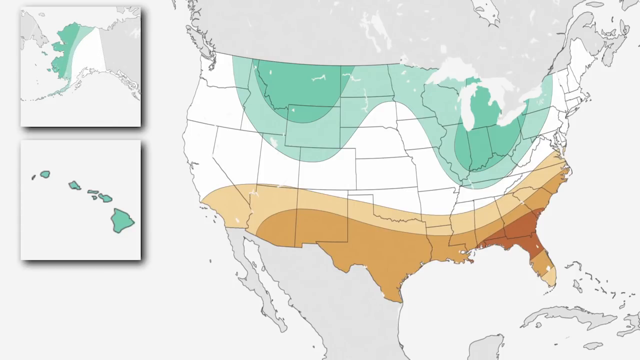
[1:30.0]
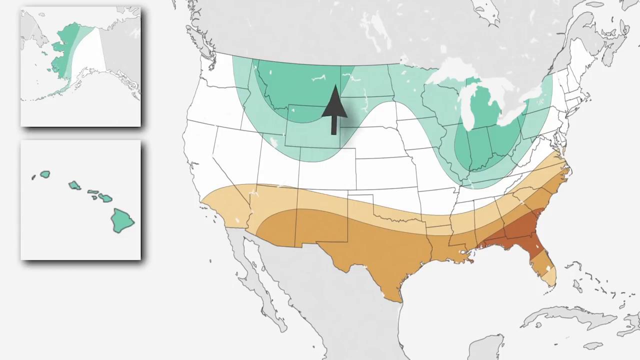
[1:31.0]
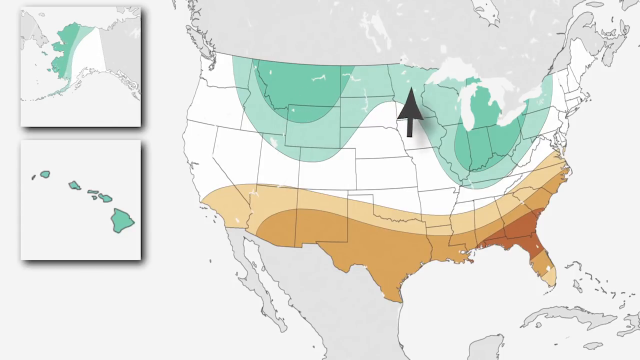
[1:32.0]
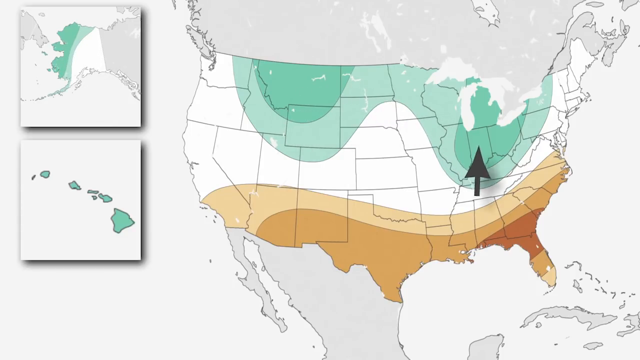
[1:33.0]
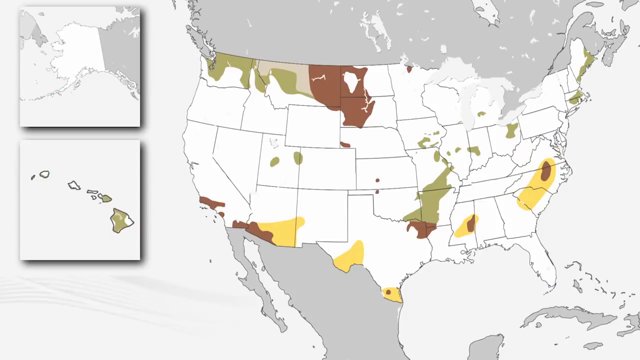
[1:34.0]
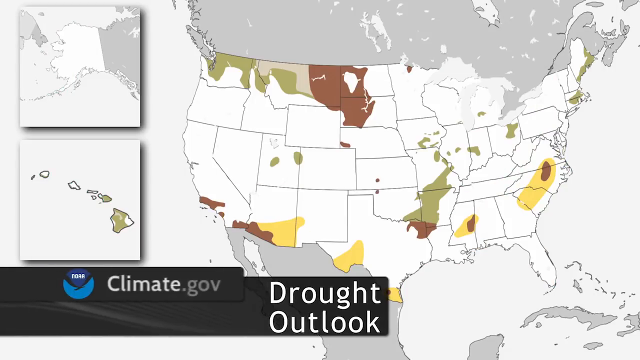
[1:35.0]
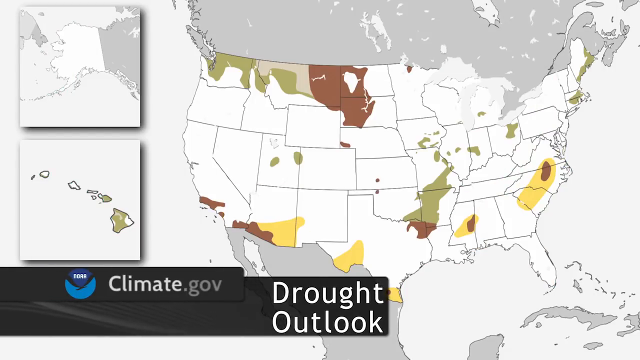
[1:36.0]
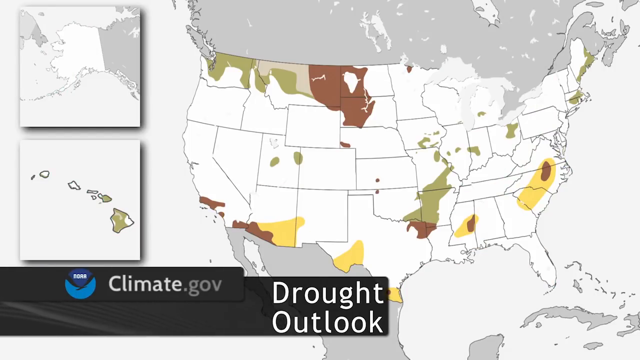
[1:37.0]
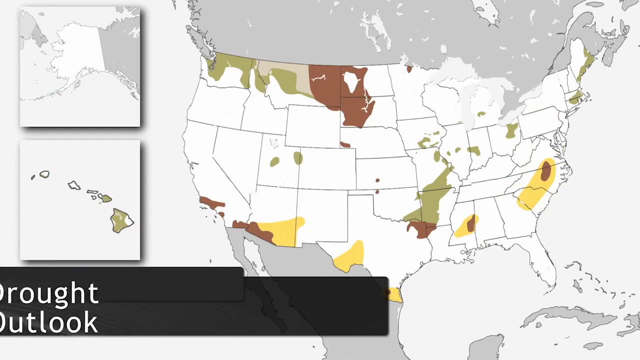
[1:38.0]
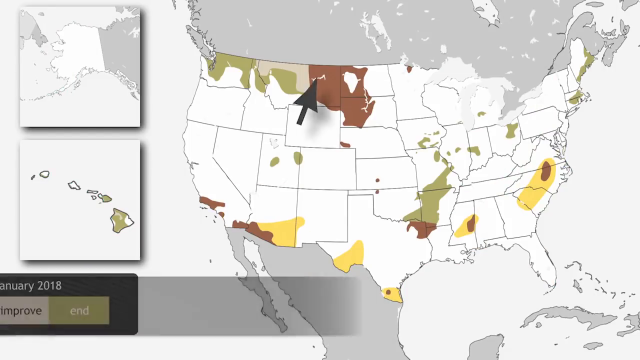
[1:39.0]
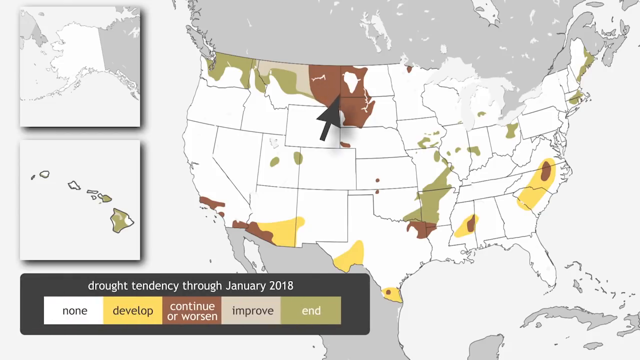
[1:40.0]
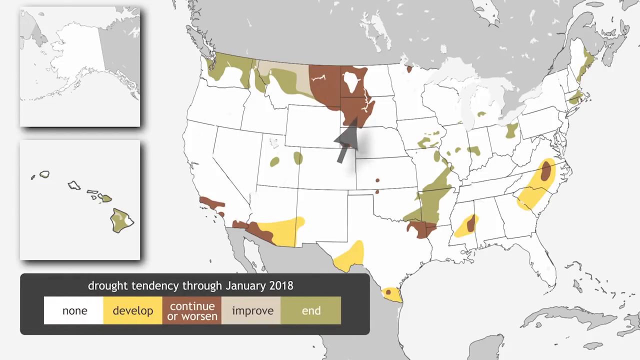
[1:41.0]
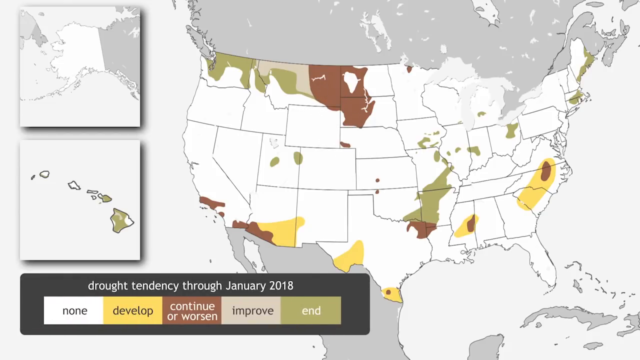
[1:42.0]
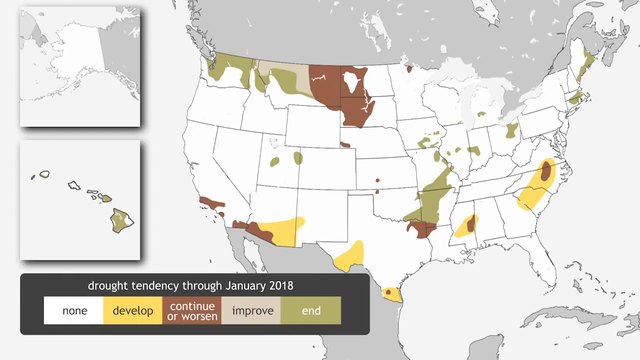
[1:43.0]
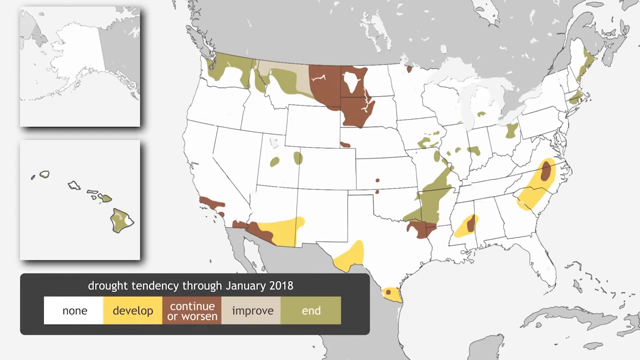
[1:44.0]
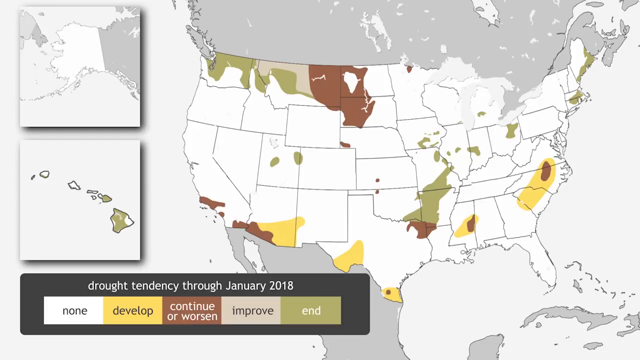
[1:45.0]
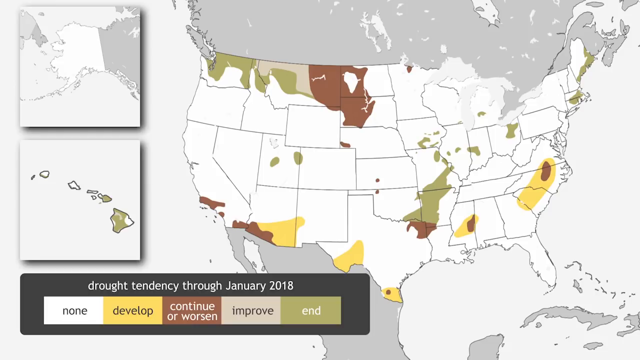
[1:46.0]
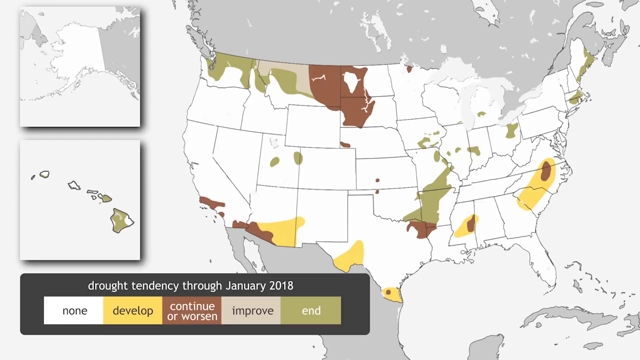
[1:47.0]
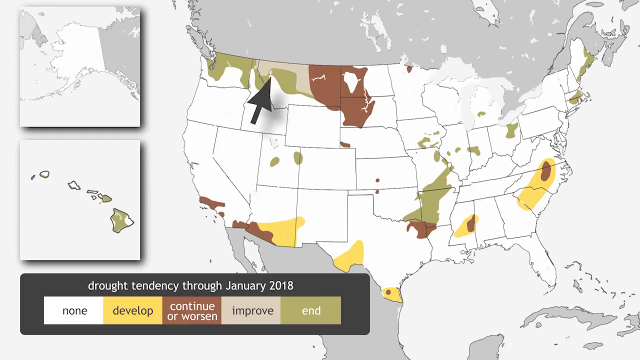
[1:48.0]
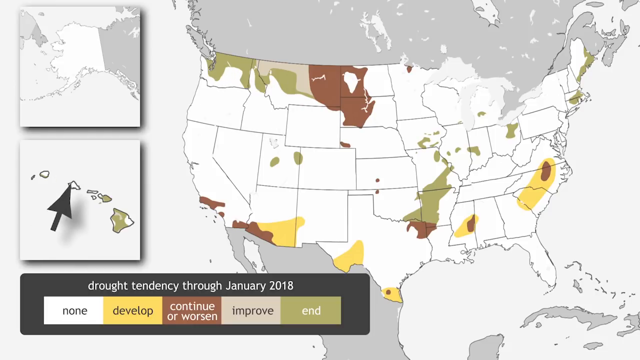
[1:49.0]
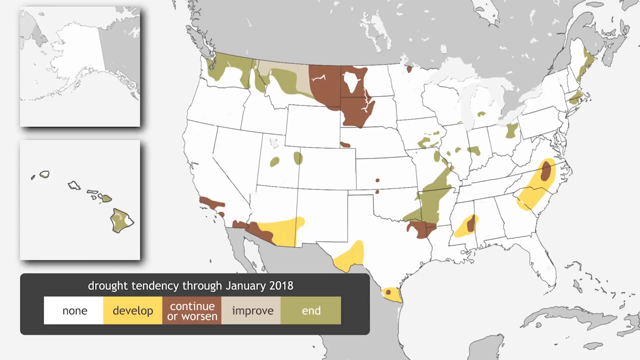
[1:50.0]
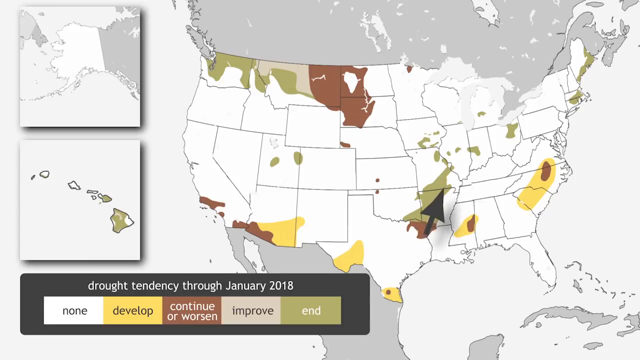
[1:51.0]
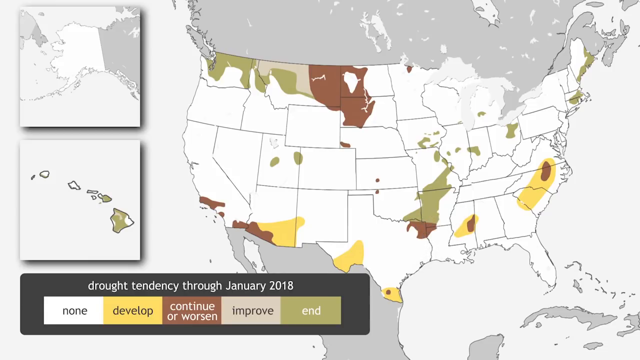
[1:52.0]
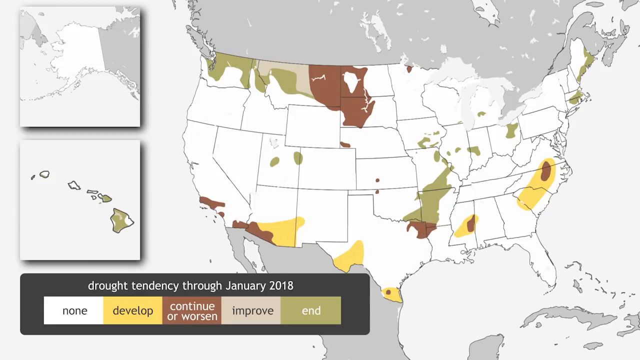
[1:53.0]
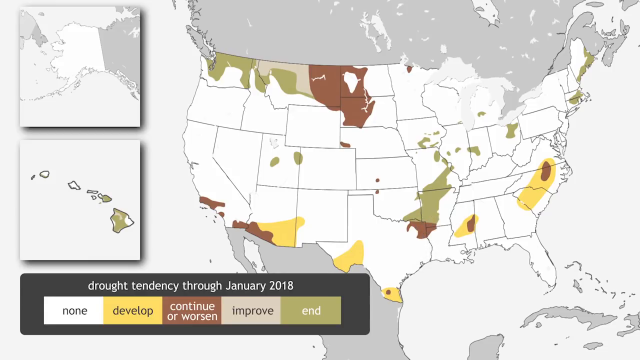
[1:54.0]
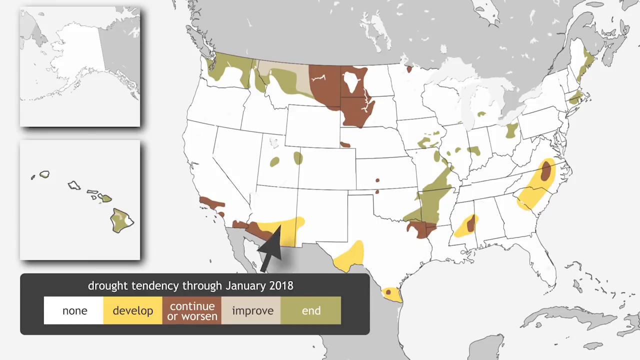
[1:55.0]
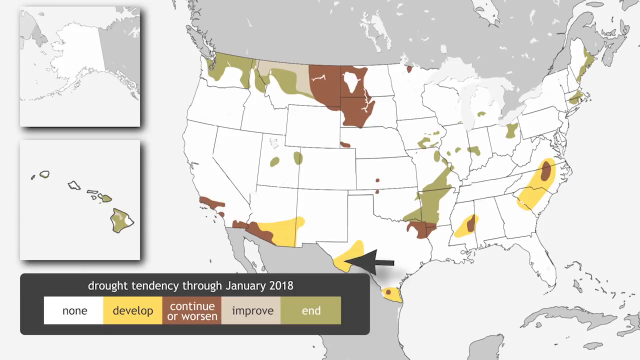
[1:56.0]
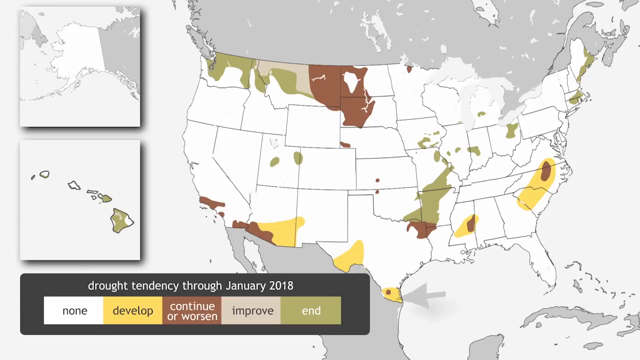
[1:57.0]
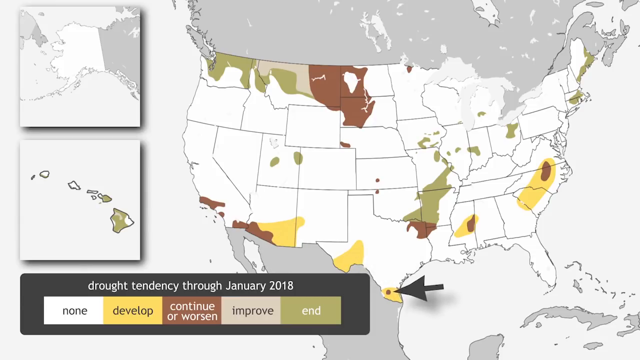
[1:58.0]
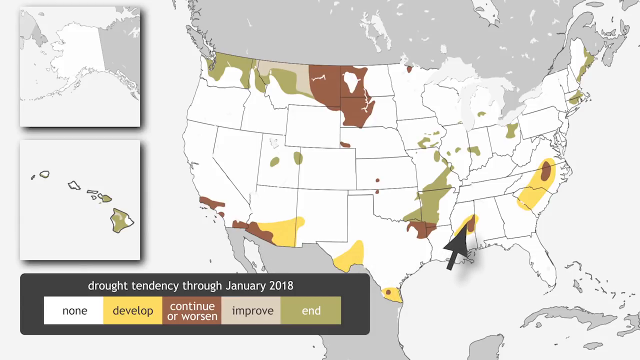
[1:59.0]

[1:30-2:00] The map shows the greening of the Great Lakes area and around the border. It predicts drought in Montana, Minnesota and Colorado, drought conditions around Arkansas and scattered throughout the United States, and an end to the drought conditions in Hawaii, with no change in Alaska. Diagrams show exactly where the droughts are predicted to take place, mostly in the upper Midwest.